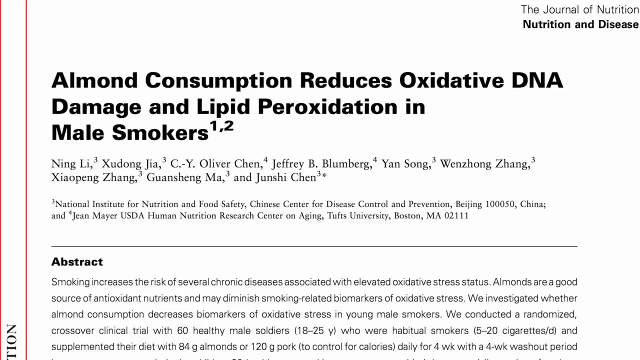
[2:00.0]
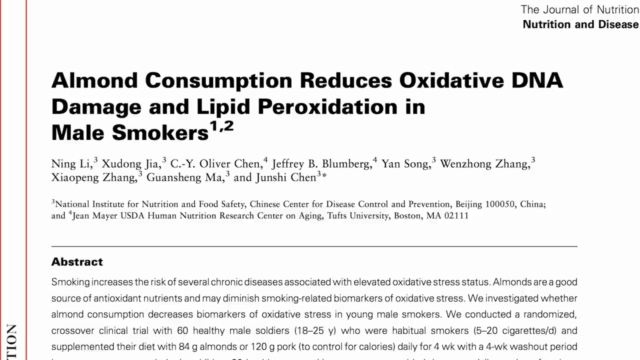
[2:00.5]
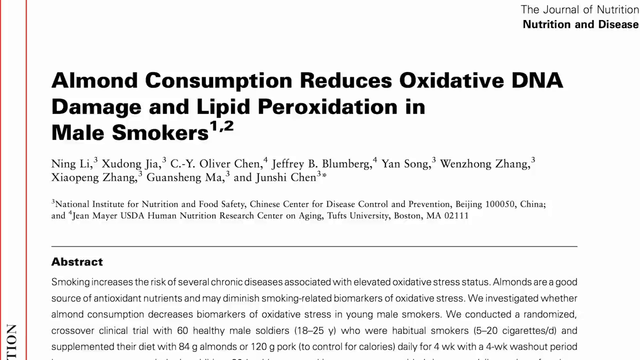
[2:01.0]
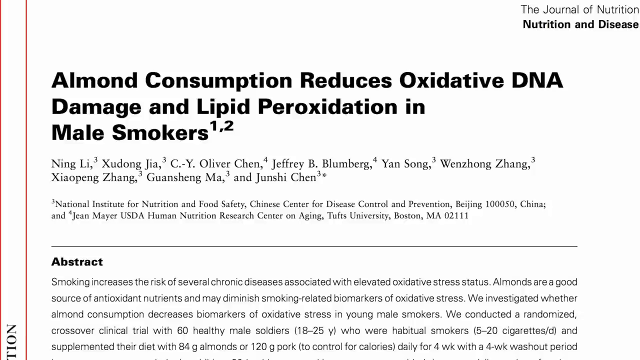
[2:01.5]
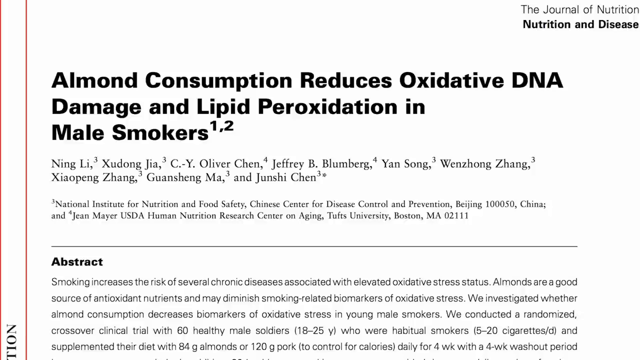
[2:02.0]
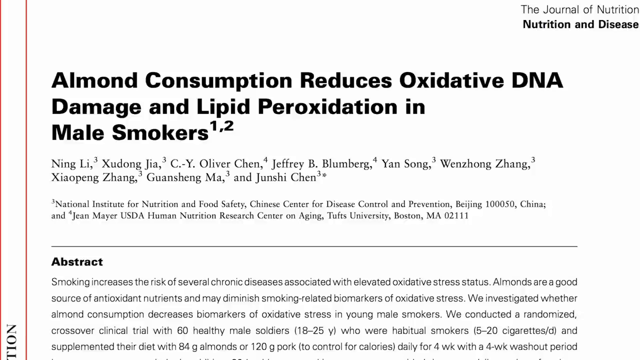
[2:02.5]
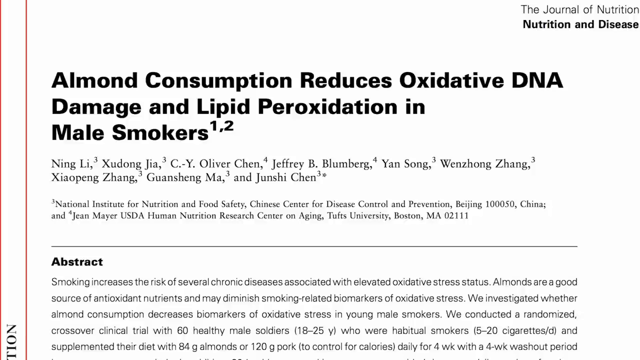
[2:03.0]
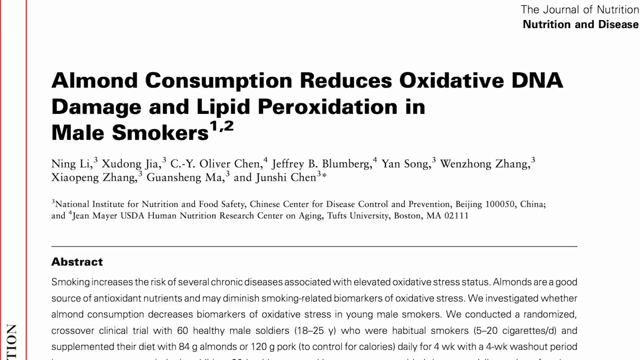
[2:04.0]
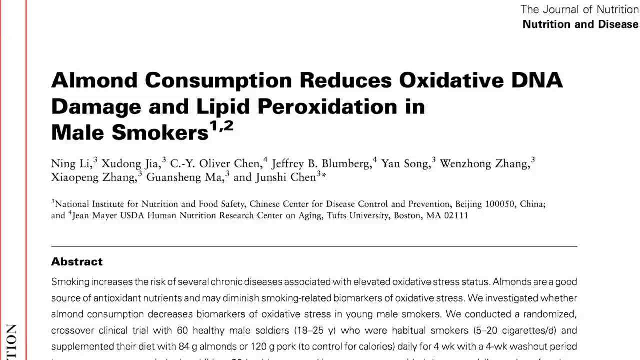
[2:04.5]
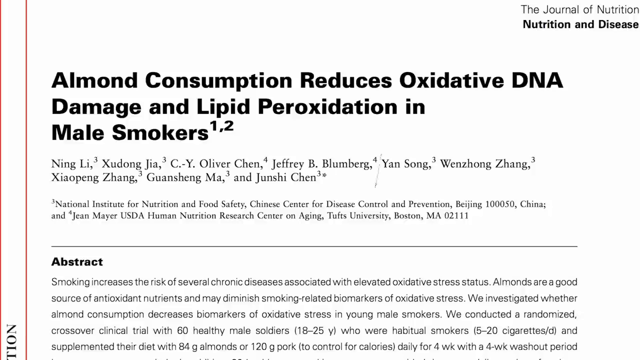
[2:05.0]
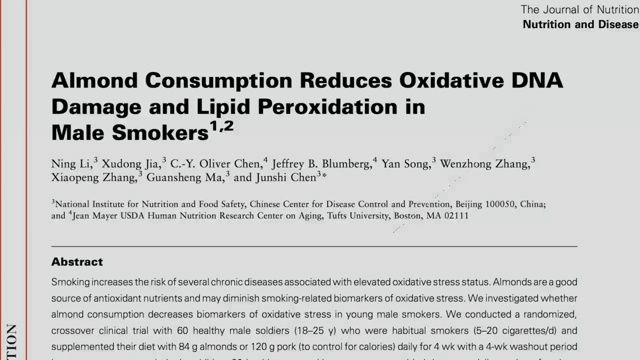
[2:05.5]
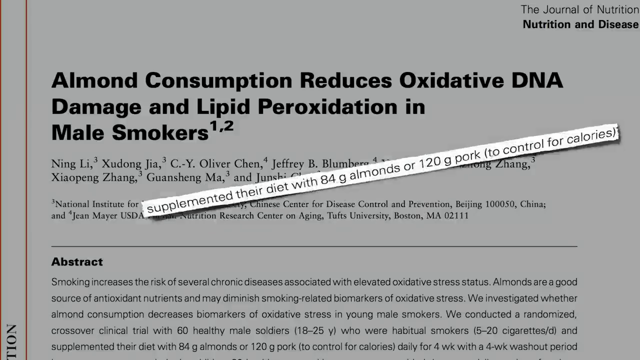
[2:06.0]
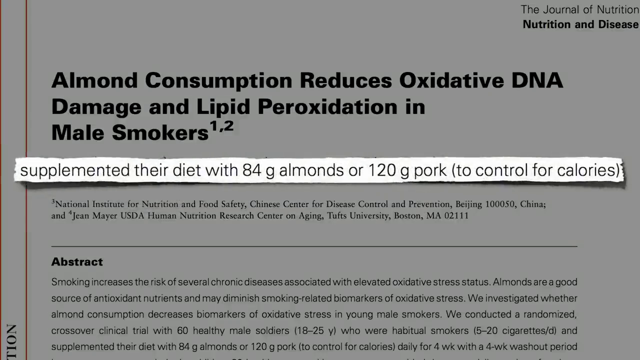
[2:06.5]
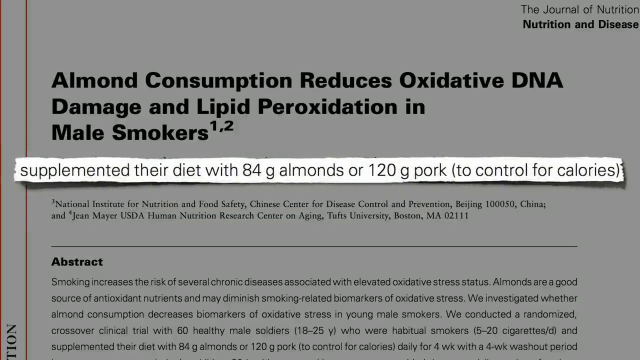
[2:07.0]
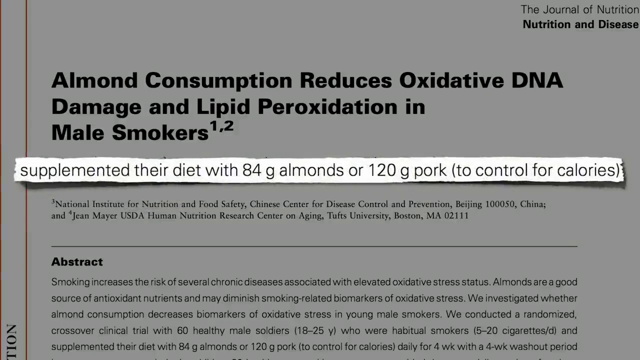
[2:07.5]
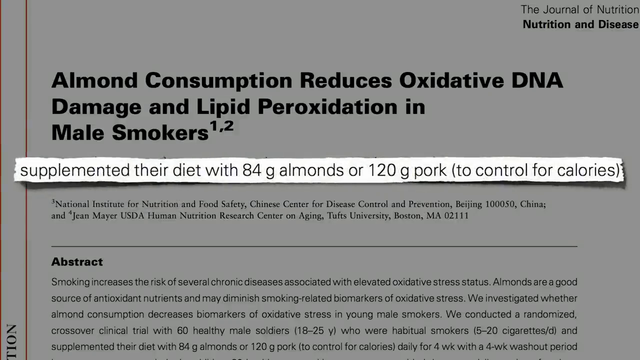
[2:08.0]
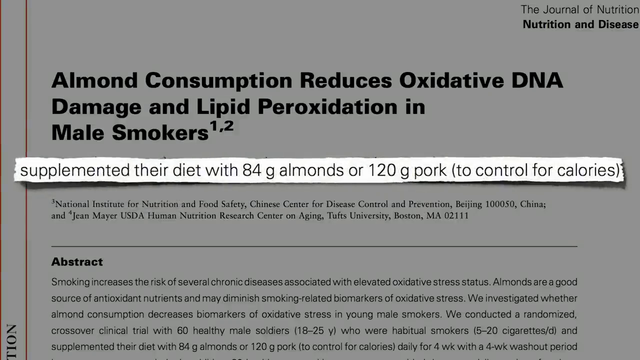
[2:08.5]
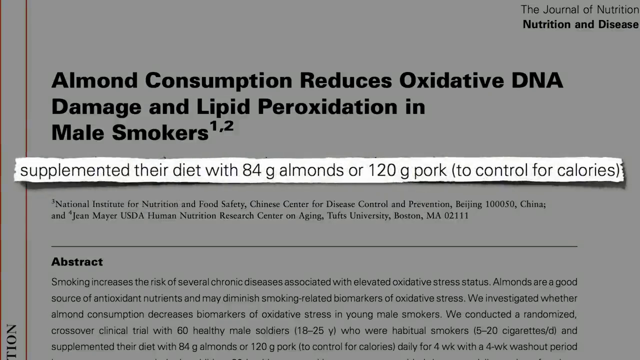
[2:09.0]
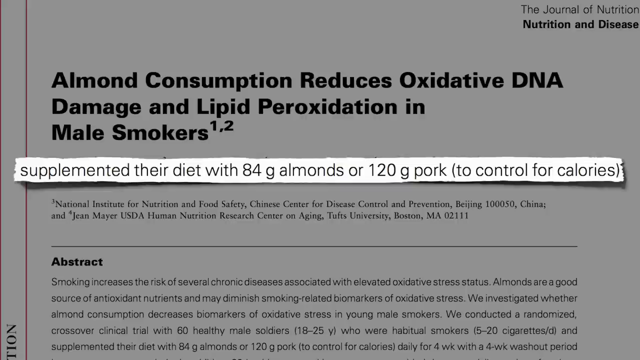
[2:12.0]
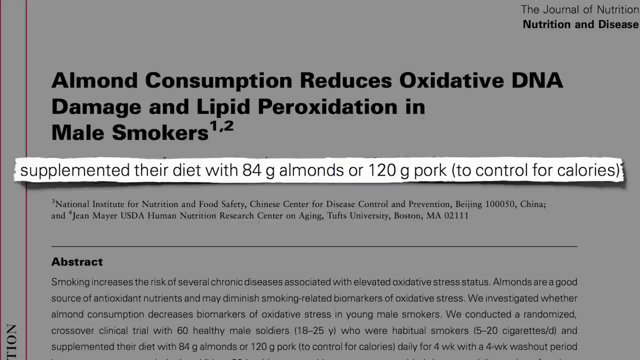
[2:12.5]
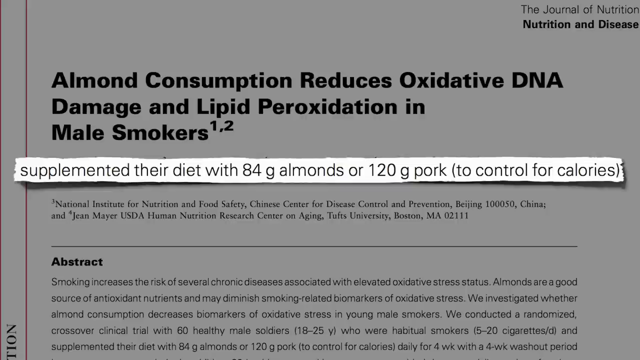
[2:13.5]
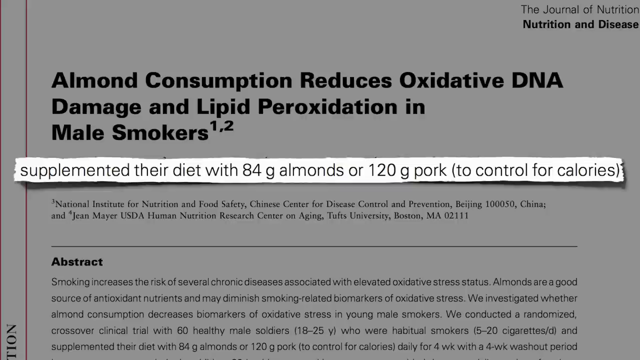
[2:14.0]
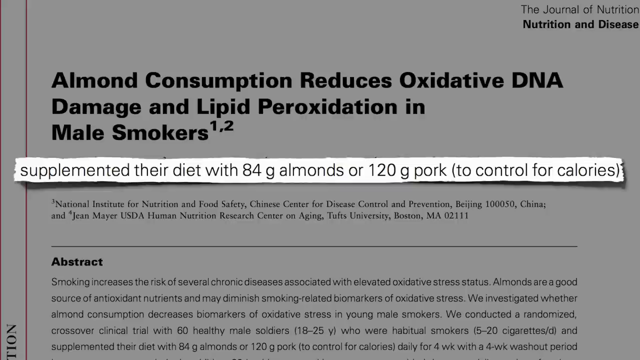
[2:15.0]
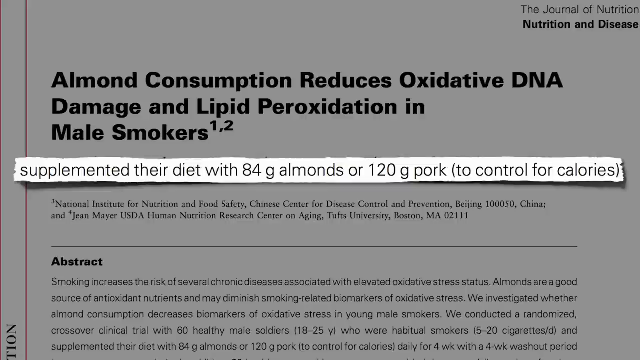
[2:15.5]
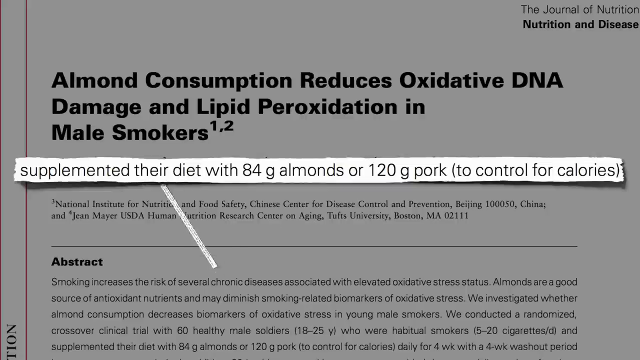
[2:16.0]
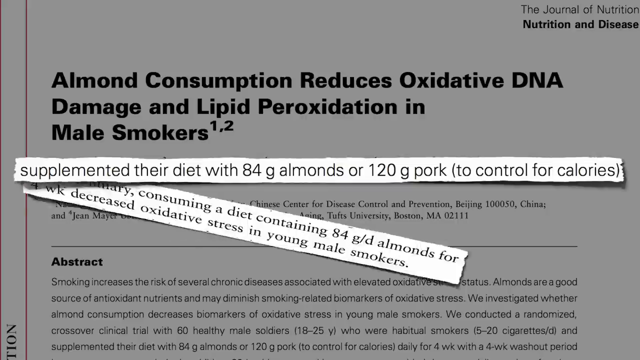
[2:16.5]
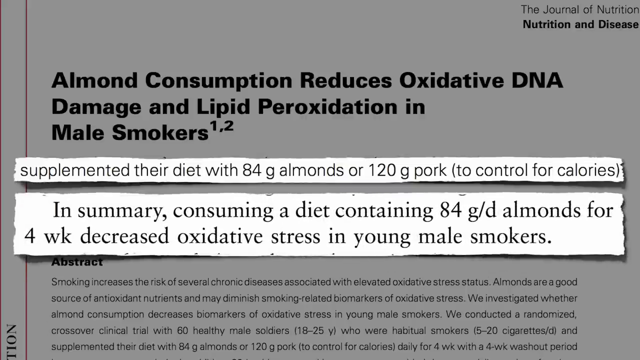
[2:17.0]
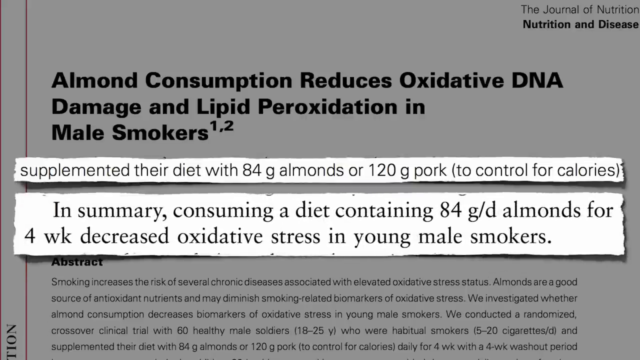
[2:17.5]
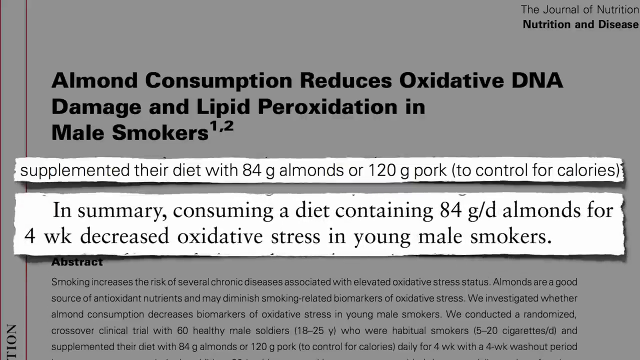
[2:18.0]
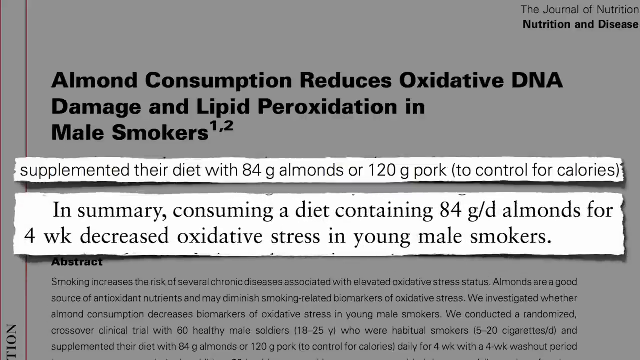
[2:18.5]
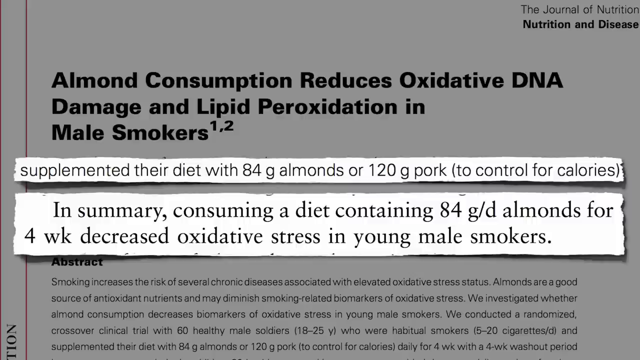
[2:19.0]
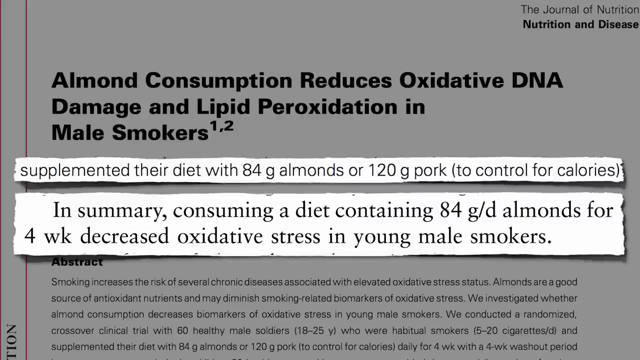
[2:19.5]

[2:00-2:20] The article with the title "almond consumption reduces oxidative DNA damage and lipid peroxidation in male smokers" is shown for a few seconds, then a highlighted line pops up over the article reading "supplemented their diet with 84 g almonds or 120 g pork to control for calories." It stays on the article for a number of seconds. A new banner then pops up over the article reading "in summary, consuming a diet containing 84 g/d almonds for four weeks decreased oxidative stress in young male smokers." The top corner of the page still reads "the Journal of Nutrition, Nutrition and Disease," and a red line runs vertically down the left-hand side of the page, like on a piece of written paper.